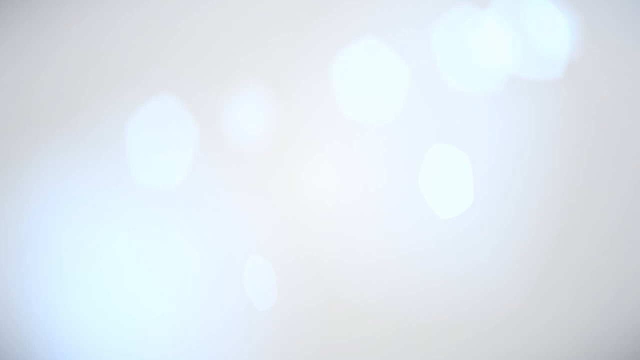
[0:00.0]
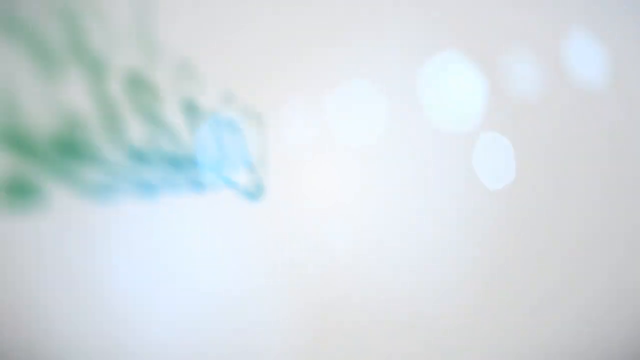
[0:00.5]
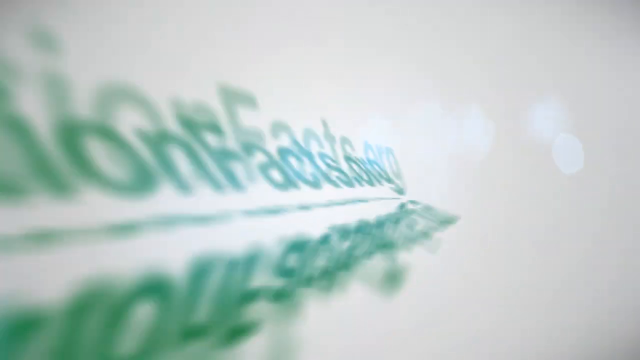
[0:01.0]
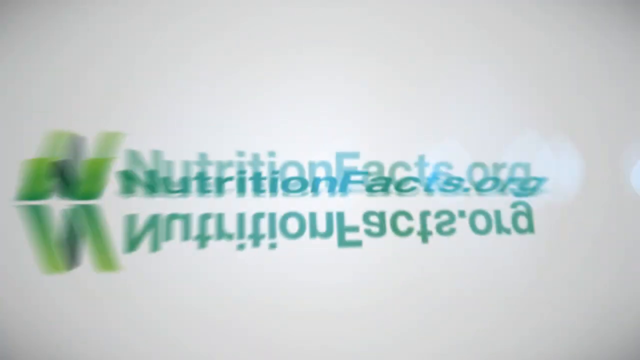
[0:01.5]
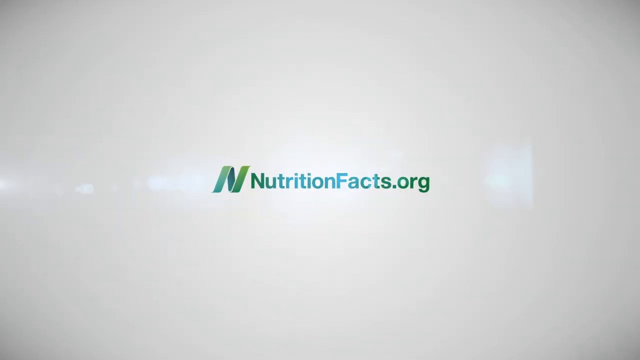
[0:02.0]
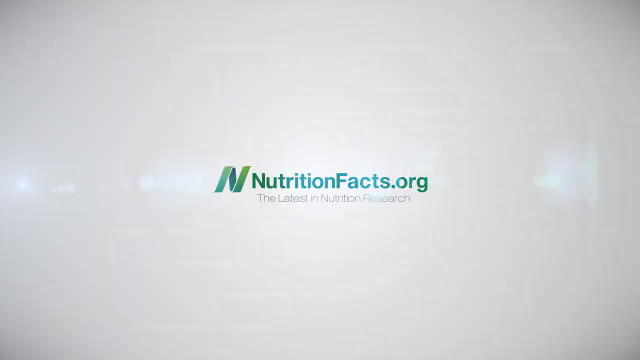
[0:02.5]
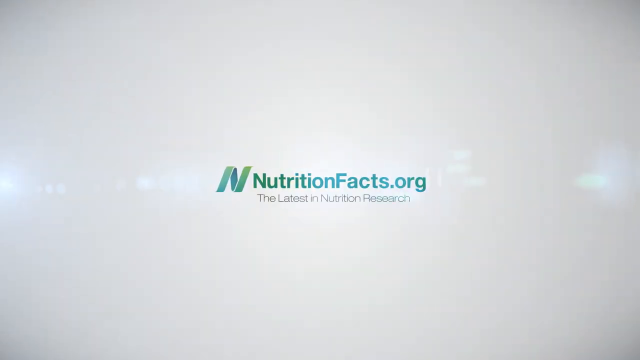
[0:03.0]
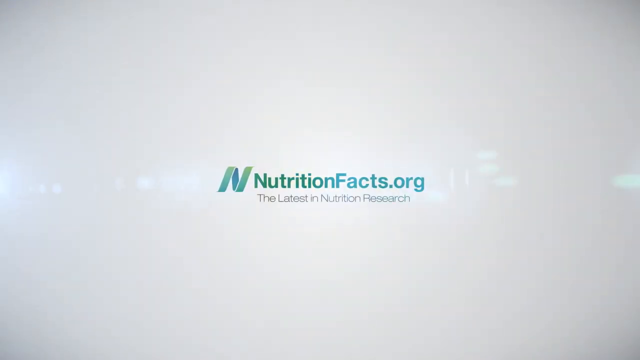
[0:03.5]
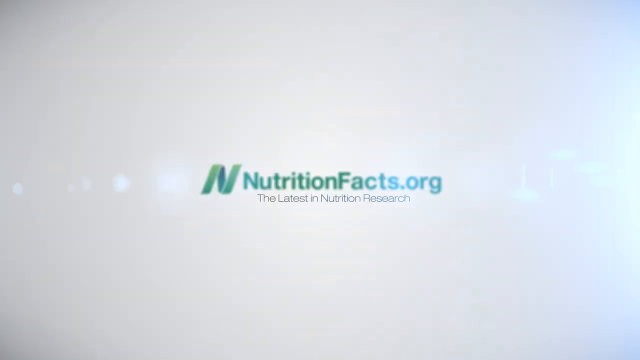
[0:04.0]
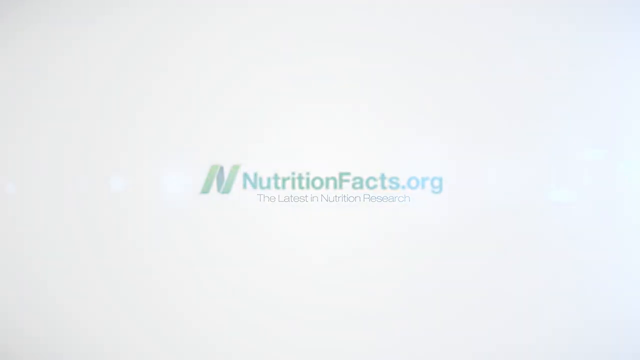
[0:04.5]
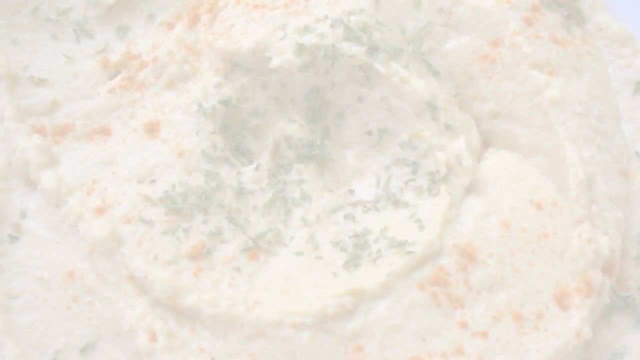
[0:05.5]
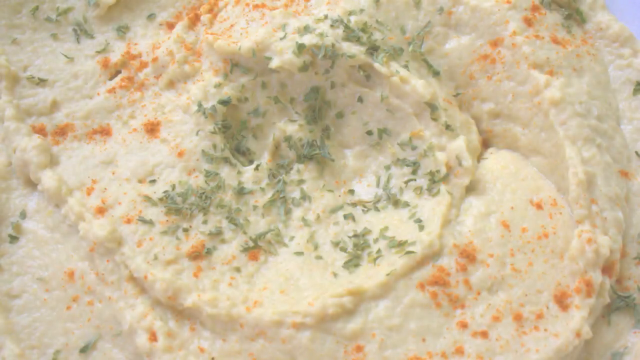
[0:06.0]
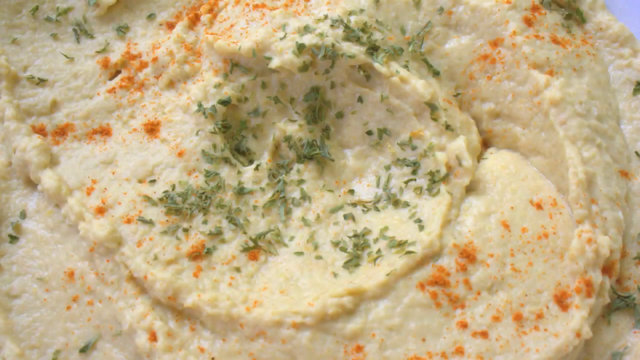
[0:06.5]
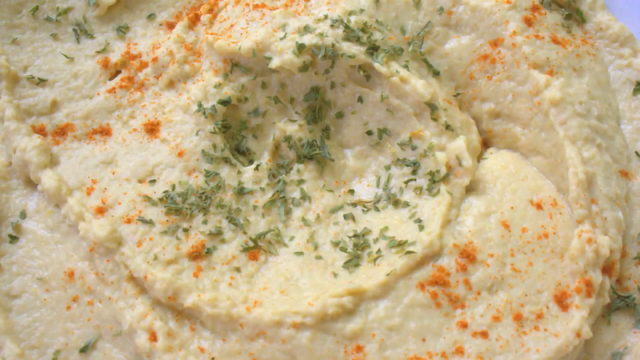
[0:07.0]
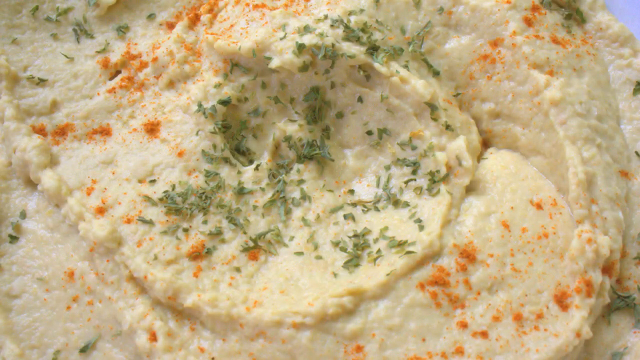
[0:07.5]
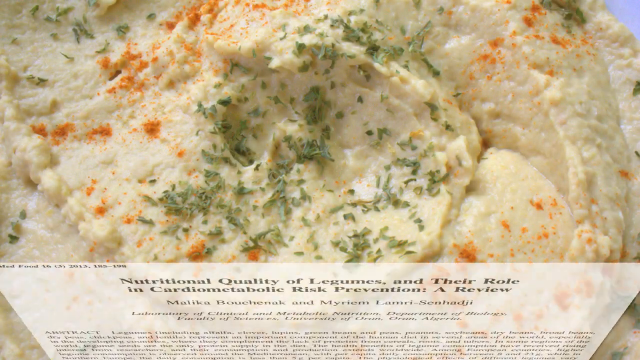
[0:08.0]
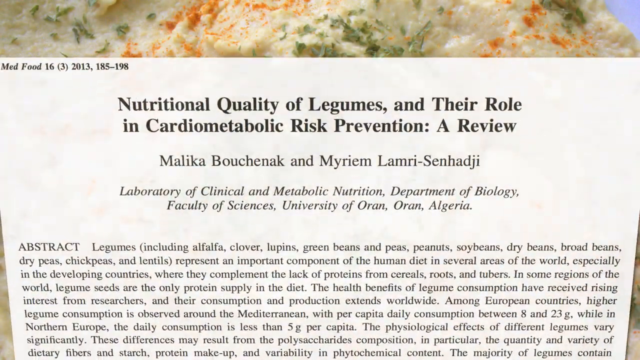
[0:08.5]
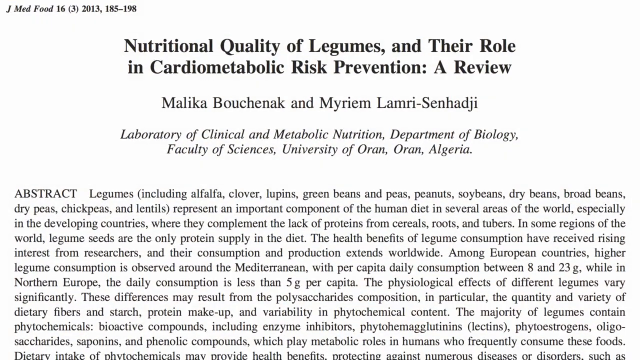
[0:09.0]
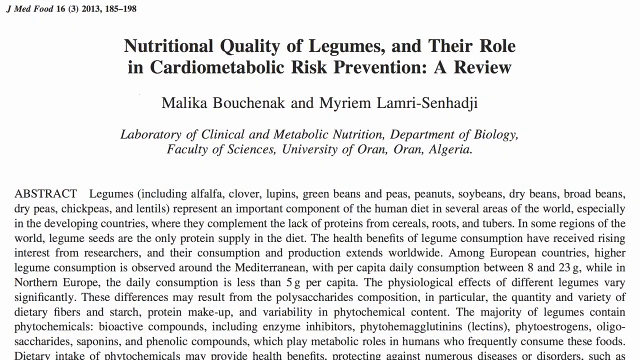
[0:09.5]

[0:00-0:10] The video opens on a white background with nothing on the screen. A green logo appears that reads "nutritionfacts.org", with the N in nutrition and the F in facts in uppercase, and the logo itself is also an N. Below it is a black subheading reading "the latest in nutrition research". Next comes a picture of some food, possibly mashed potatoes, with green basil in the middle and red paprika sprinkled on top. The view zooms out and a journal paper appears, titled "Nutritional quality of legumes and their role in cardiometabolic risk prevention, a review". It is by Malika Bouchenak and Myriem Lamri Senhadji, whose last name has a colon in the middle. The paper lists "Laboratory of Clinical and Metabolic Nutrition, Department of Biology, Faculty of Sciences, University of Oran, Oran, Algeria", and an abstract is showing on it.